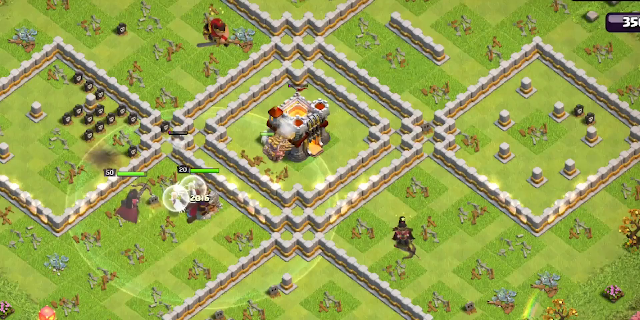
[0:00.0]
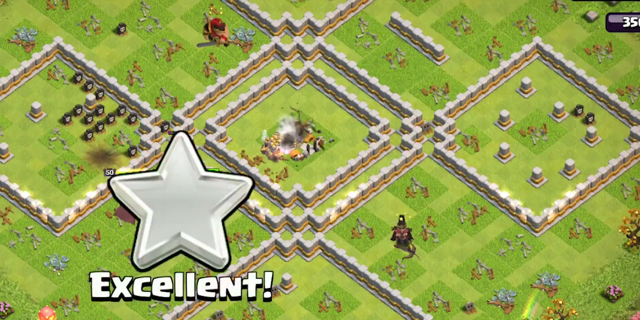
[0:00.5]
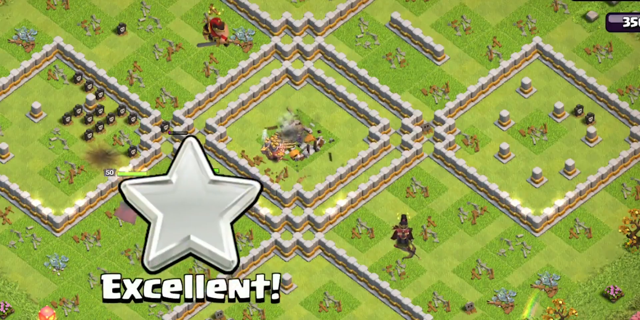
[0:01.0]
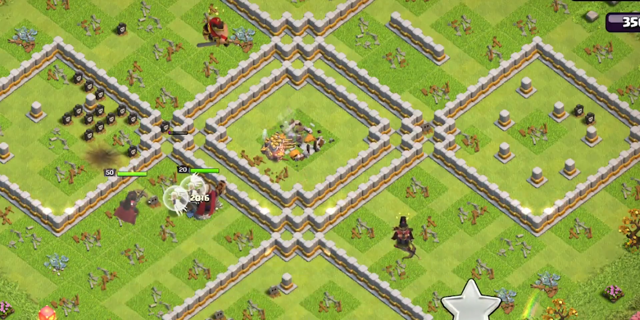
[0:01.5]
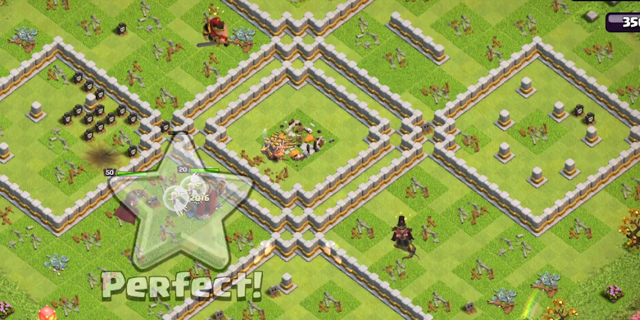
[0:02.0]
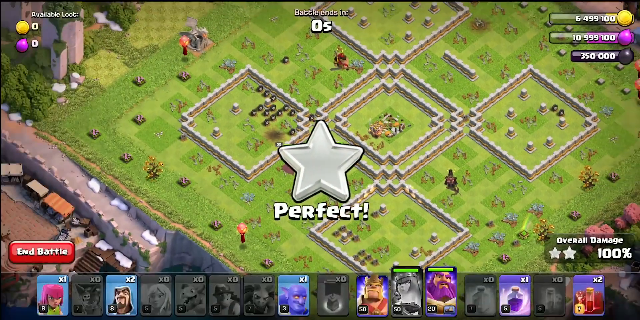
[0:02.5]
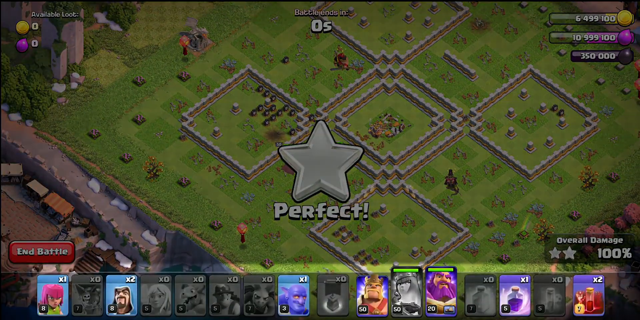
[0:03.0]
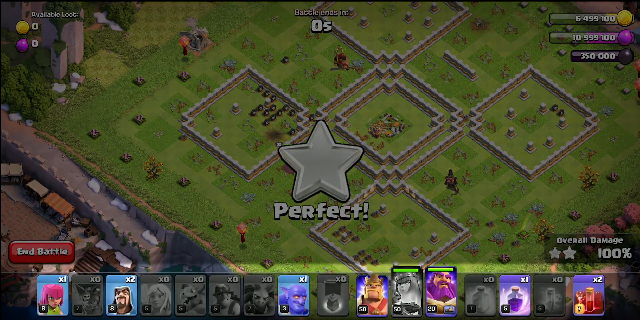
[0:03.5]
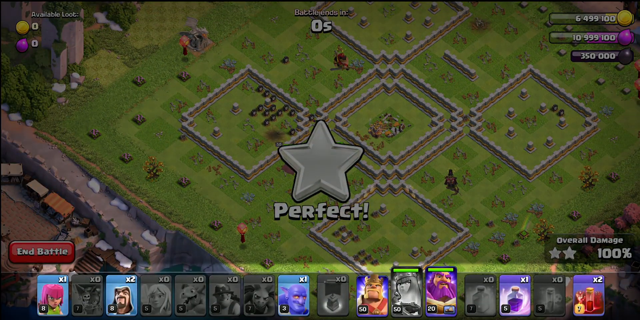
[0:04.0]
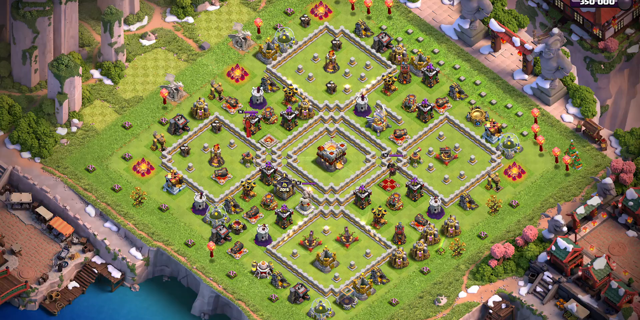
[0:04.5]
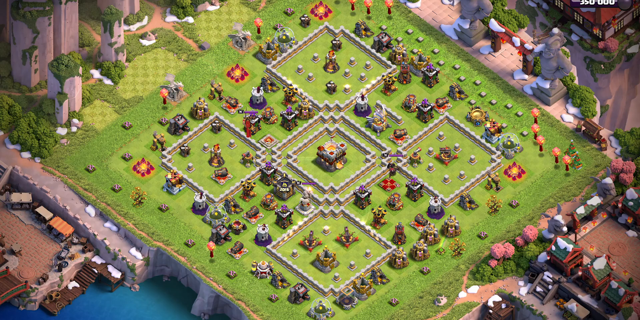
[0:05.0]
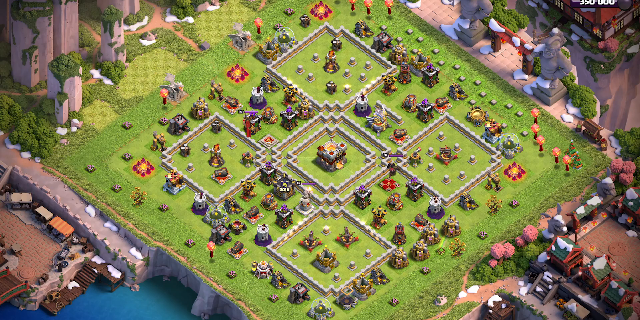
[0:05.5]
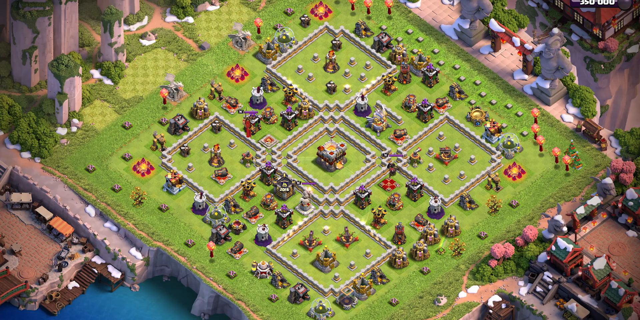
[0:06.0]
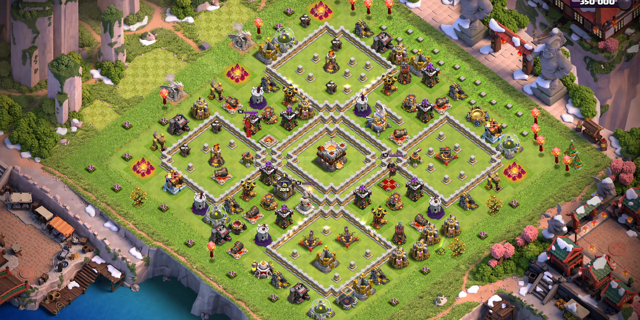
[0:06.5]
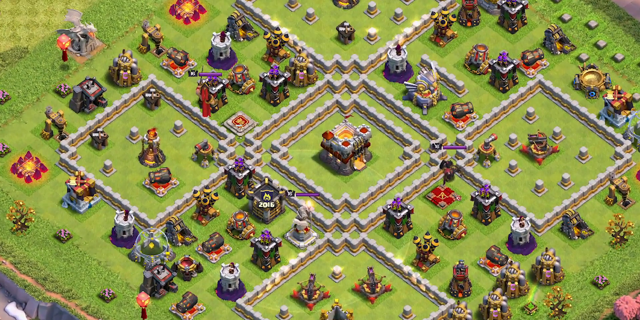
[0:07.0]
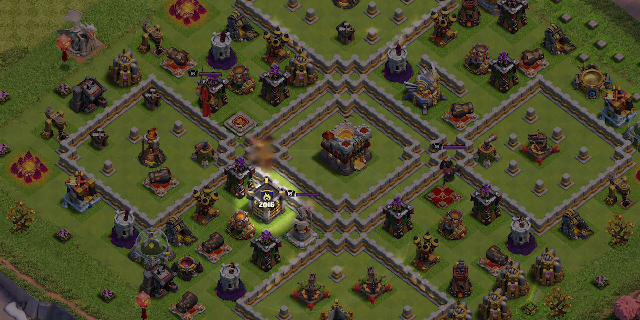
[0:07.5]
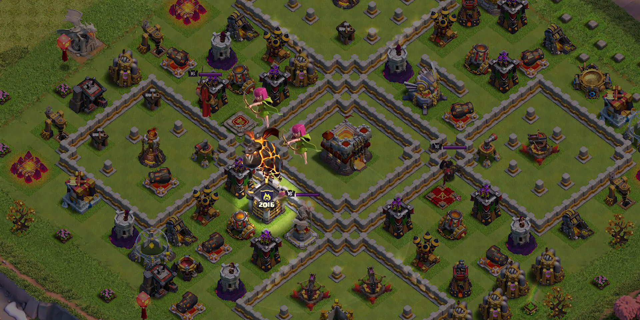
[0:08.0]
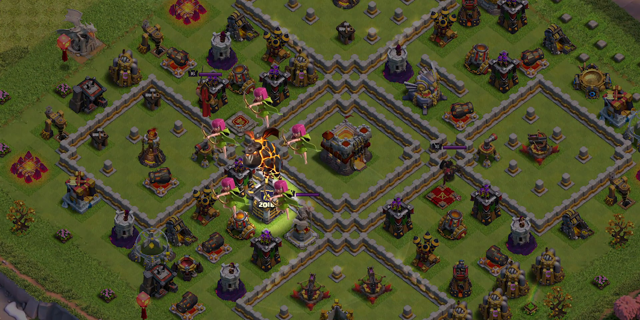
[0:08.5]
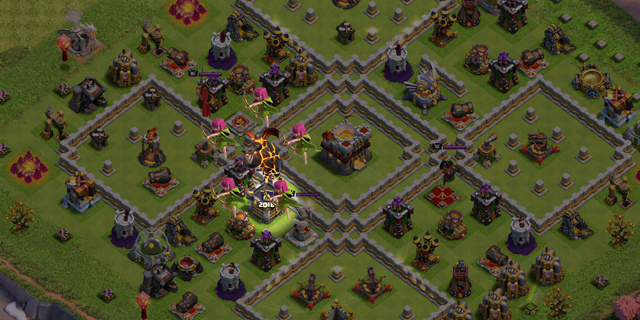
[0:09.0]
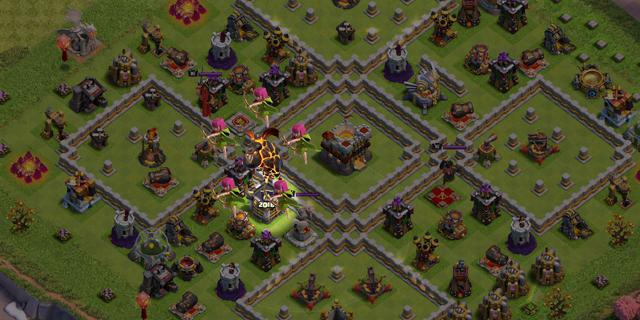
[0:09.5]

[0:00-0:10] The game is Clash of Clans. Several units are on the stage, including towers, archers and other units. The player destroys the opponent's land and gets a "perfect" with zero seconds on the clock. They have about 6,449,000 coins, about 10,999,000 purple goop and 350,000 bombs or goop. The overall damage exceeds 100 percent.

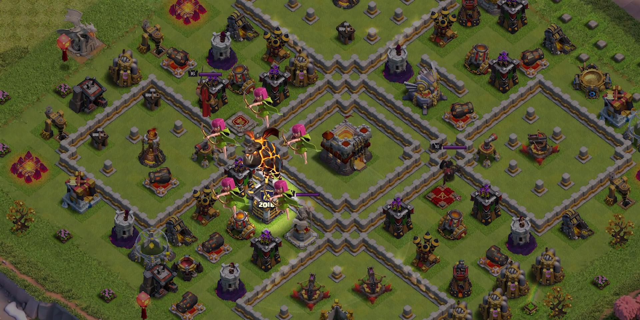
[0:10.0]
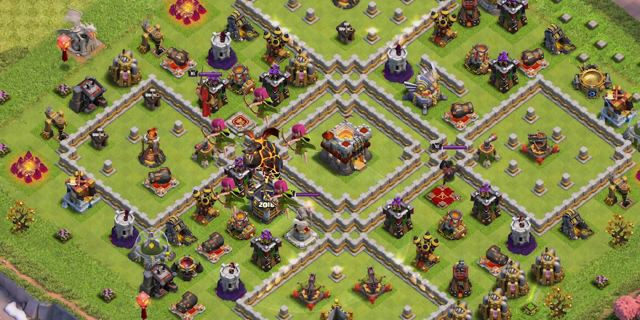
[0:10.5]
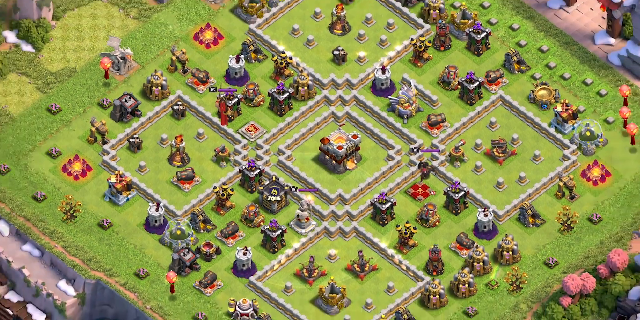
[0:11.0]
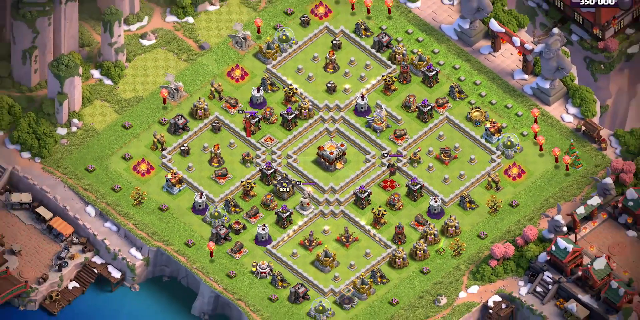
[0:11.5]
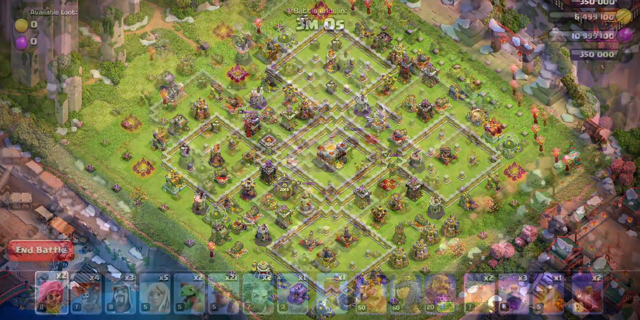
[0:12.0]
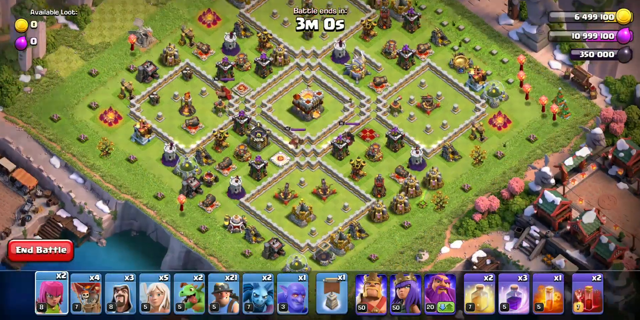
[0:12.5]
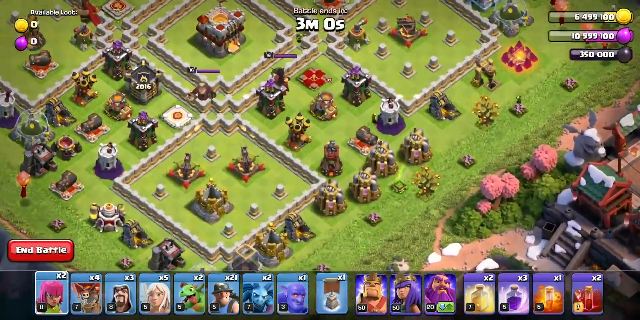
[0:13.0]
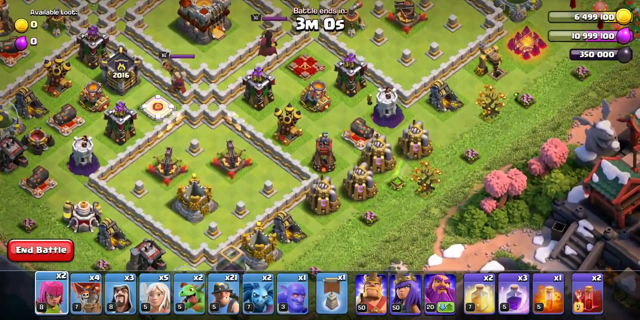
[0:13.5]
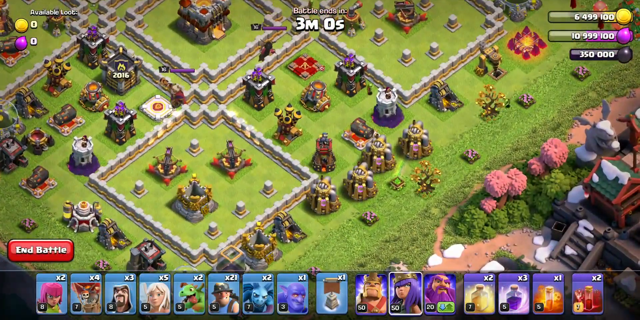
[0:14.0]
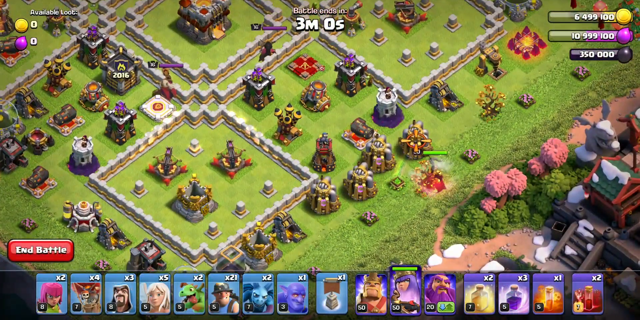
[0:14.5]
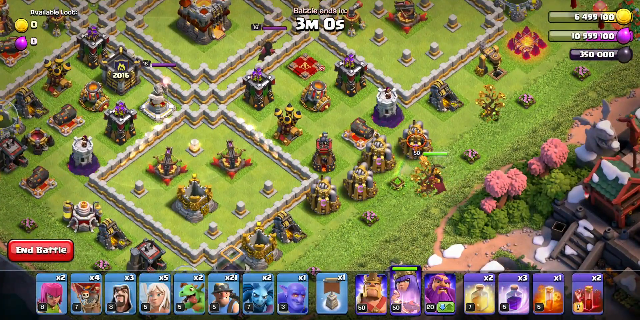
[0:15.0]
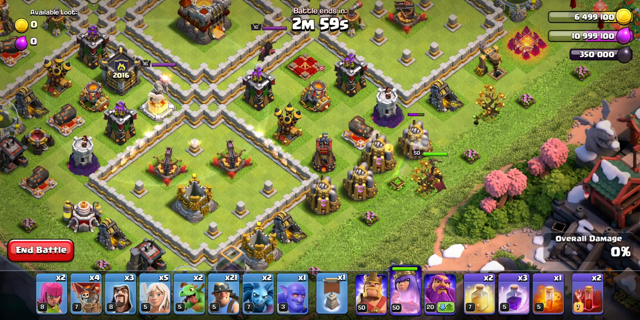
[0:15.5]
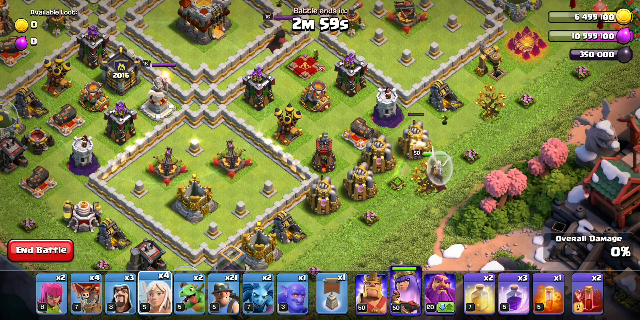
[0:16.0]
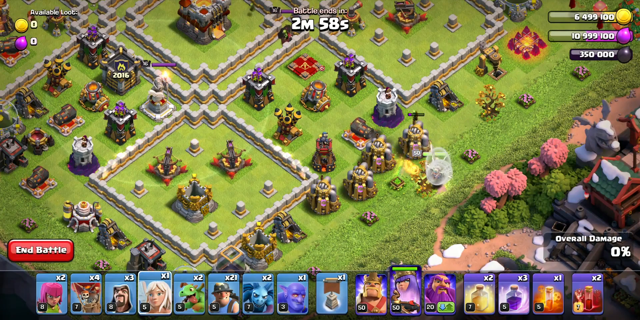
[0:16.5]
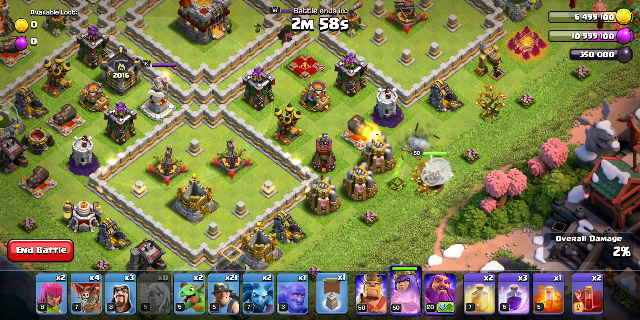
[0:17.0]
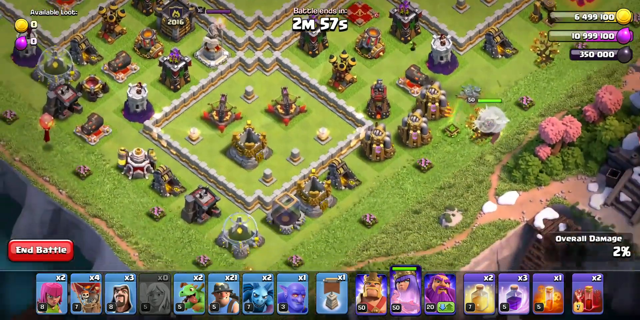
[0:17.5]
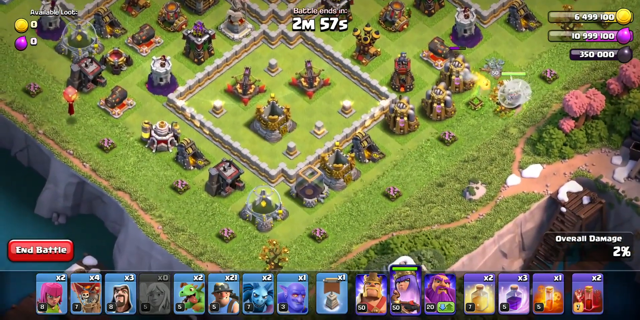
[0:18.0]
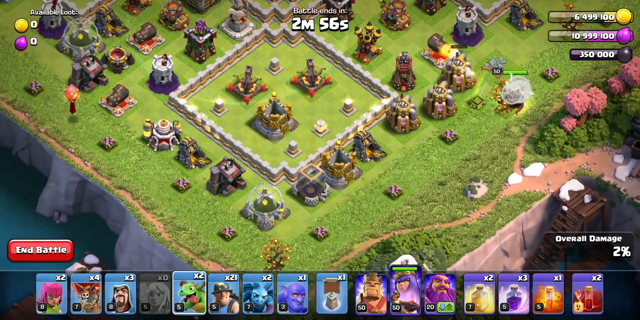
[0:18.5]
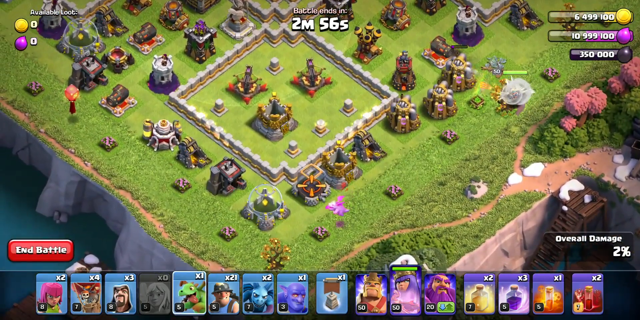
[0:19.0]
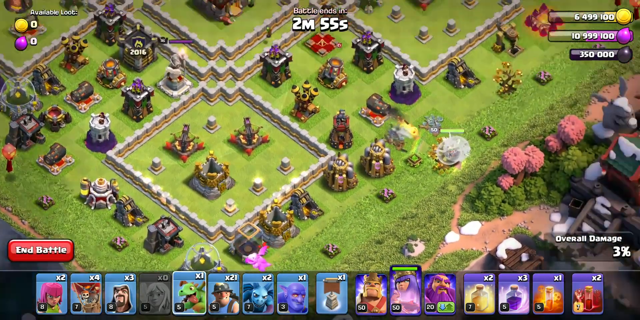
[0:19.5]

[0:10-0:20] A larger view of the opponent's area of the map shows several units, including several towers with archers and several units with large cannons. The level is on a green pasture. What appears to be housing is at the far bottom right, along with what appears to be a small grey mini dragon. The battle timer at the top middle shows three minutes. The player places units as they start to fight, and cannons go off at the top right of the screen. Dragons, one of the player's placed units, fly at the bottom. The player has a range of about 8-9 different characters.